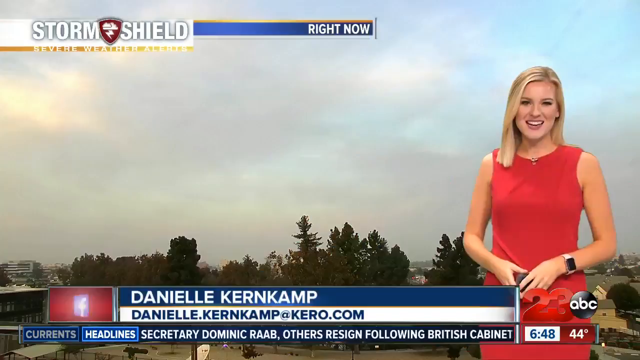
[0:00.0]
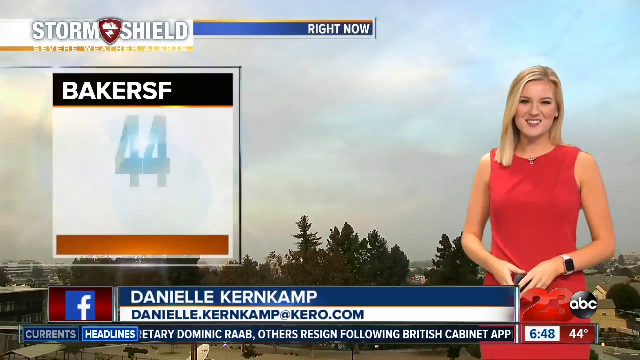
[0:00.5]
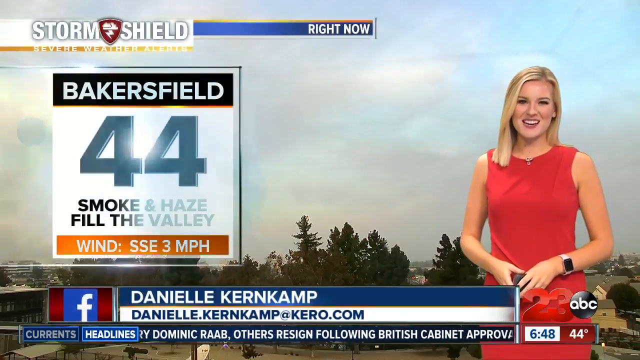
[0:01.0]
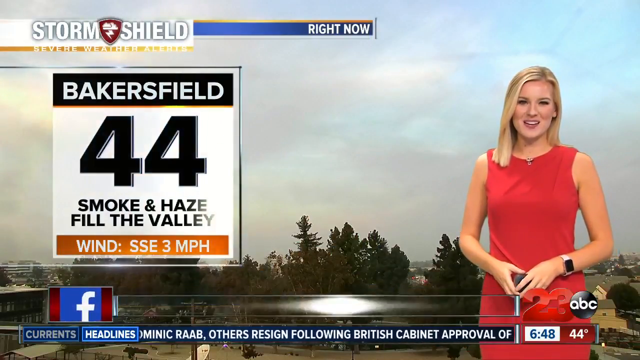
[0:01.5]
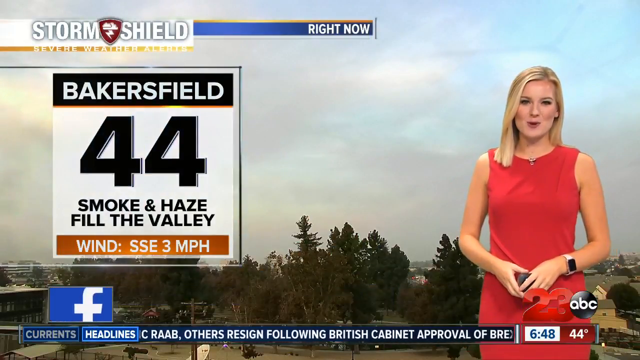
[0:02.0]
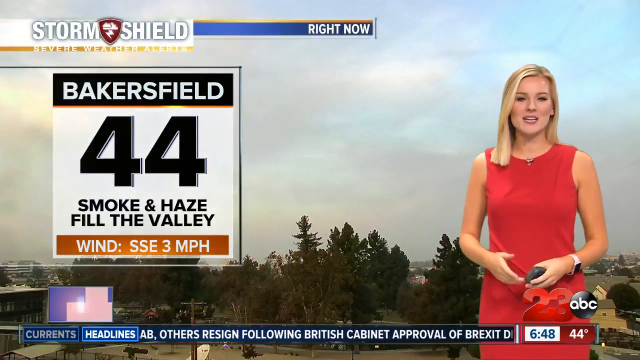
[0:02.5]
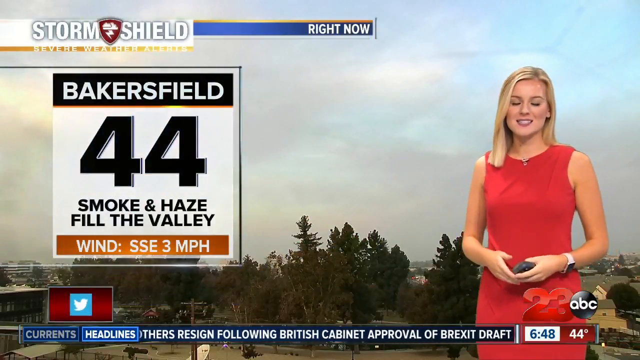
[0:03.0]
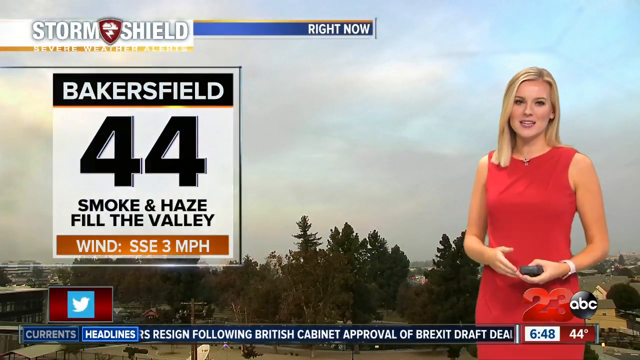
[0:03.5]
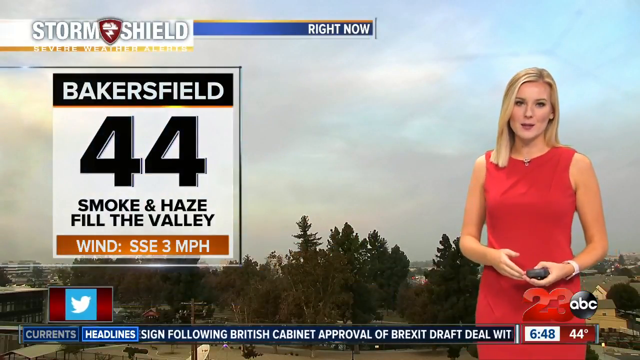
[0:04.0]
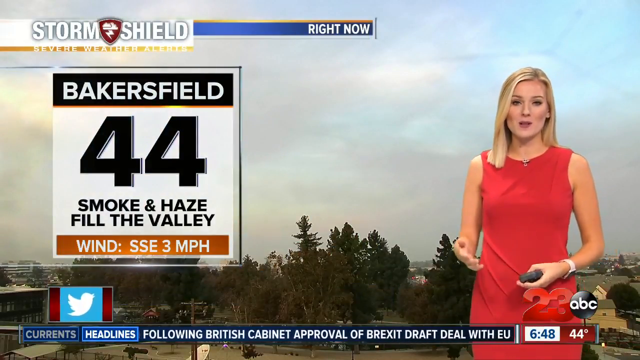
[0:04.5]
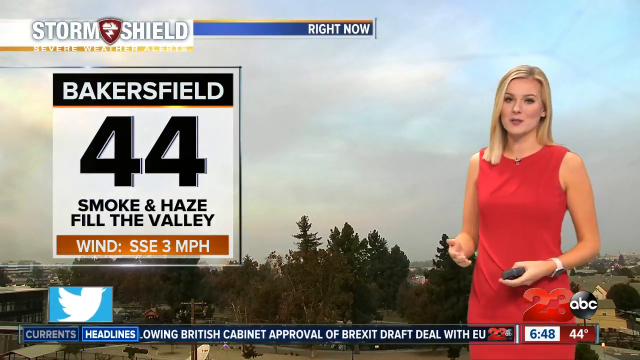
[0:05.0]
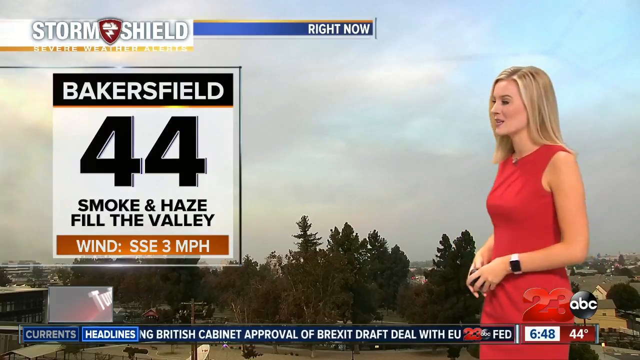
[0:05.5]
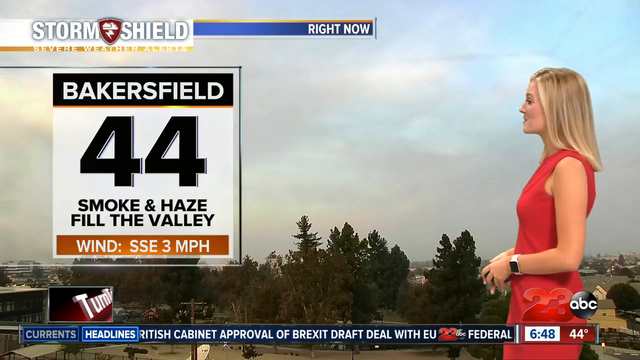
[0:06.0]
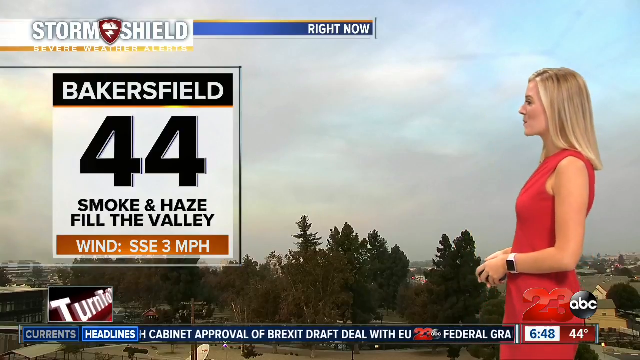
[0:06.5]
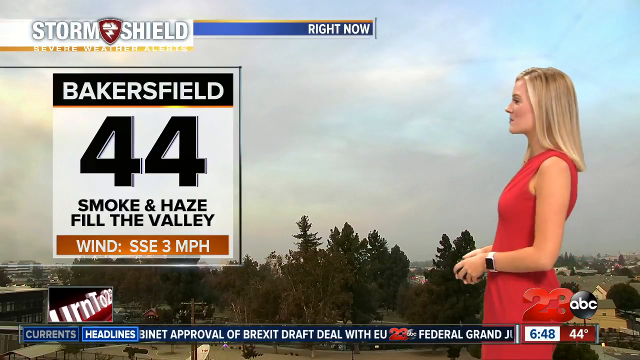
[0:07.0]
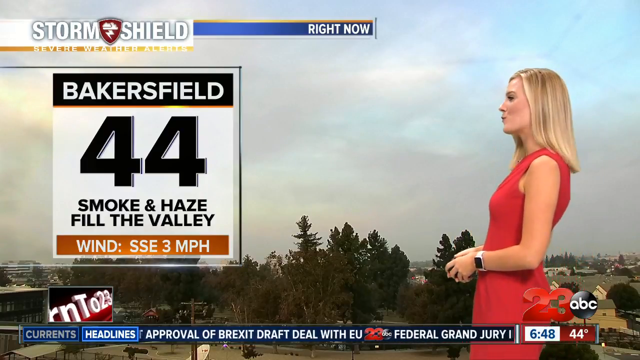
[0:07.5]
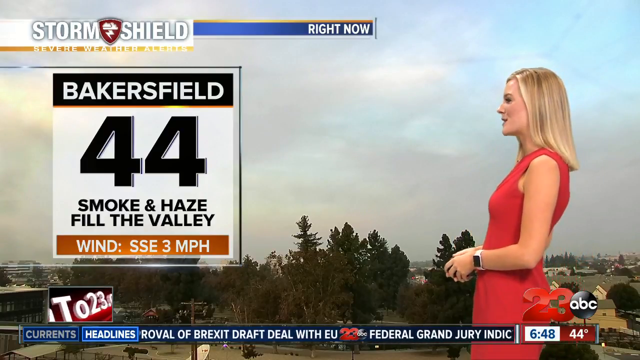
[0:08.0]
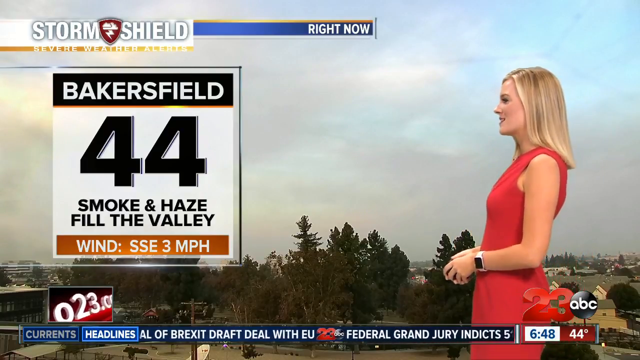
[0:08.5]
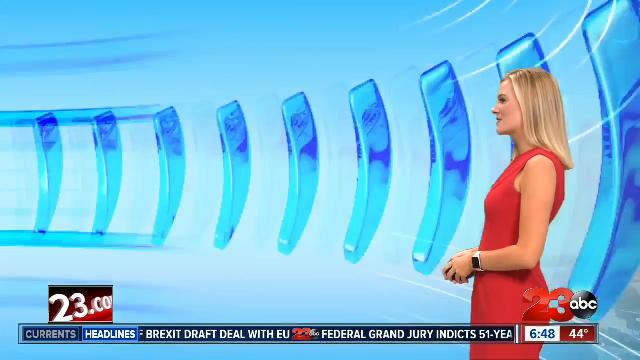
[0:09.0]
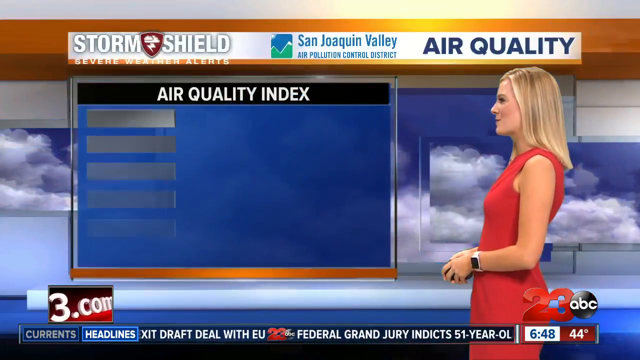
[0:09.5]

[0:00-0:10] The video opens on a newscast. A woman with blonde, shoulder-length hair and a red dress is standing in front of a large screen. The screen shows an outdoor view from treetop level looking out over a city, with clouds in the sky, perhaps even overcast, and thicker smoke coming from the left-hand side of the screen. The title card reads "'Bakersfield 44' Smoke and Haze Fill the Valley." The woman continues to speak and use hand gestures while holding a remote and turning to the right. The graphic makes fluid motions and transitions to a new background with an air quality index.